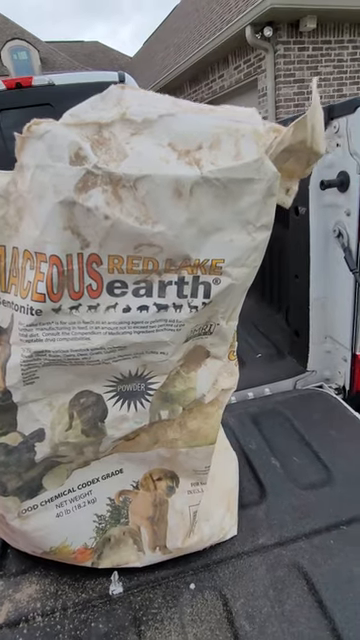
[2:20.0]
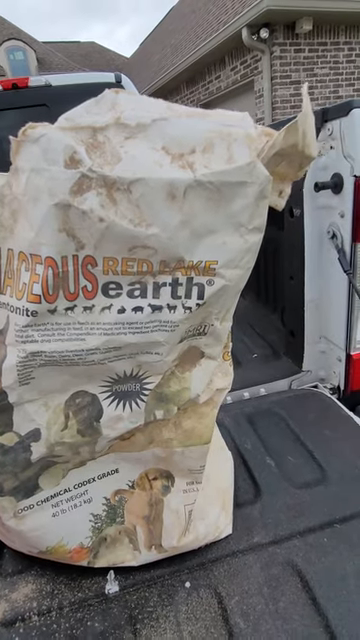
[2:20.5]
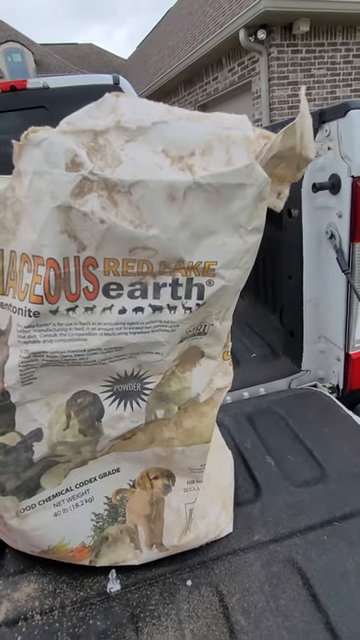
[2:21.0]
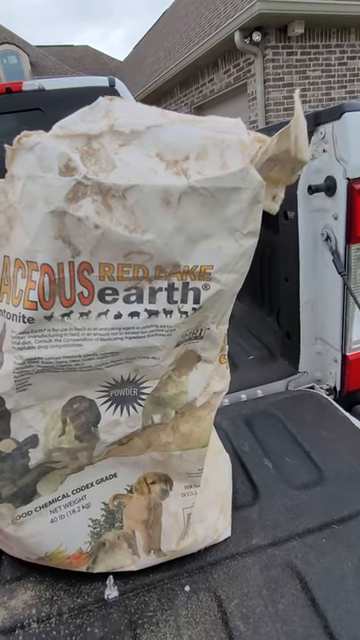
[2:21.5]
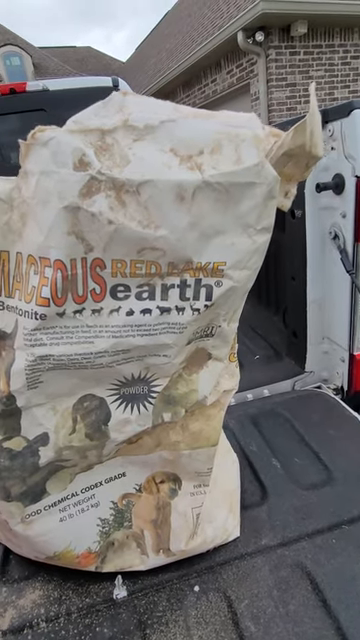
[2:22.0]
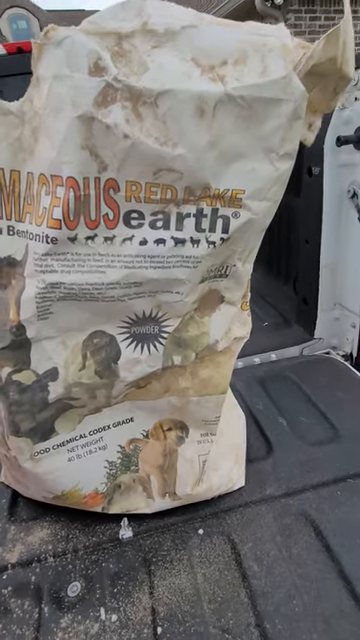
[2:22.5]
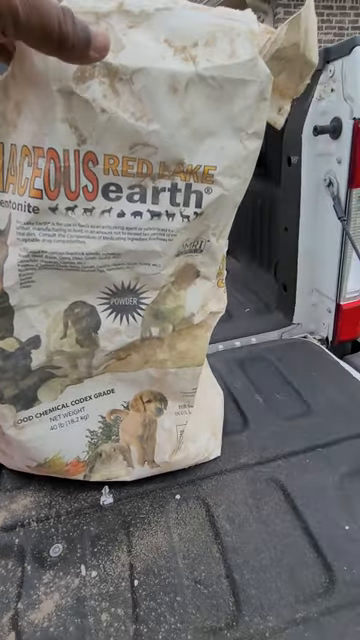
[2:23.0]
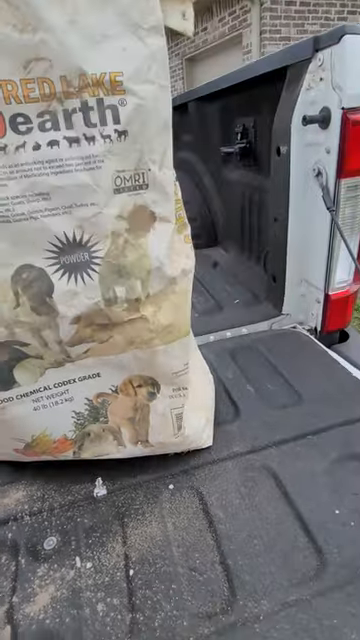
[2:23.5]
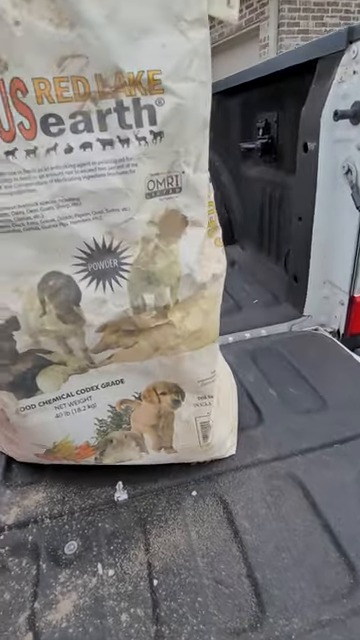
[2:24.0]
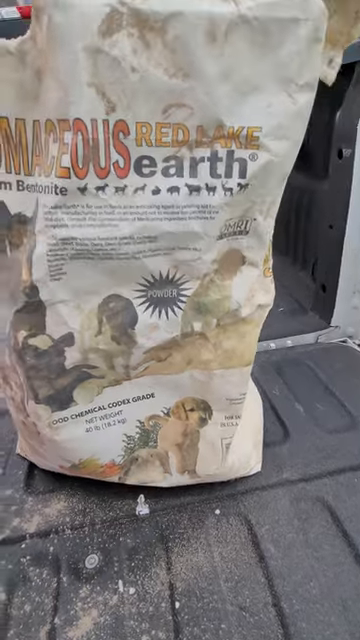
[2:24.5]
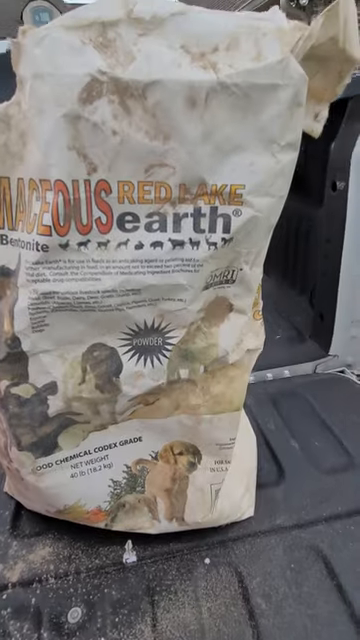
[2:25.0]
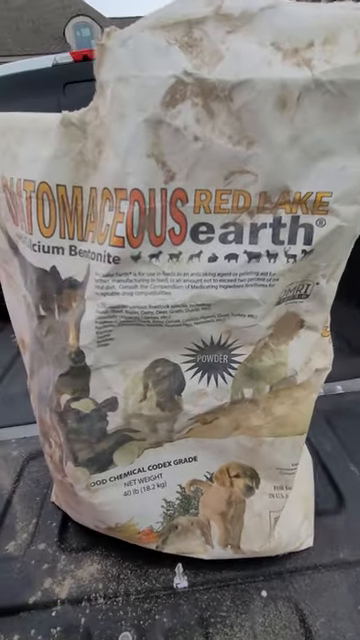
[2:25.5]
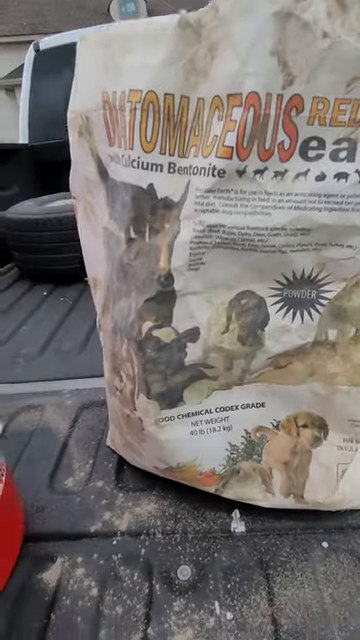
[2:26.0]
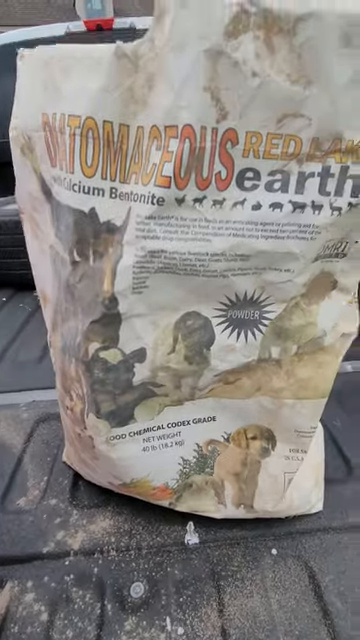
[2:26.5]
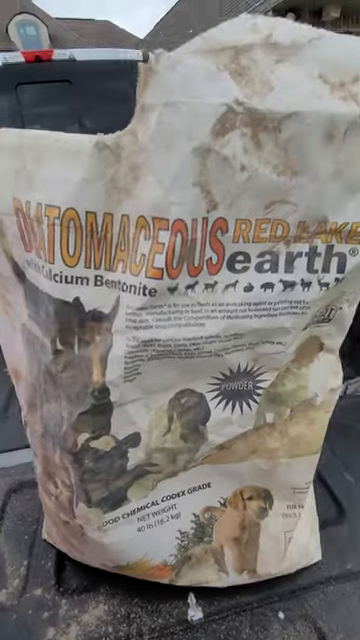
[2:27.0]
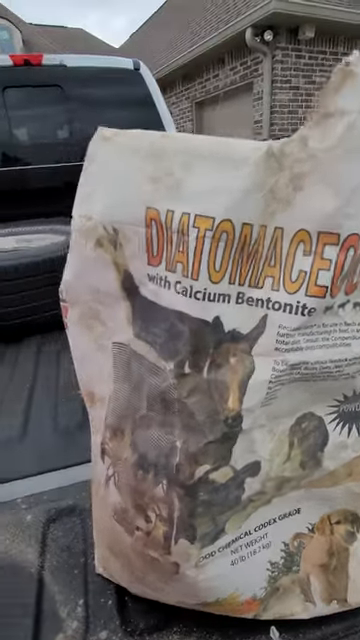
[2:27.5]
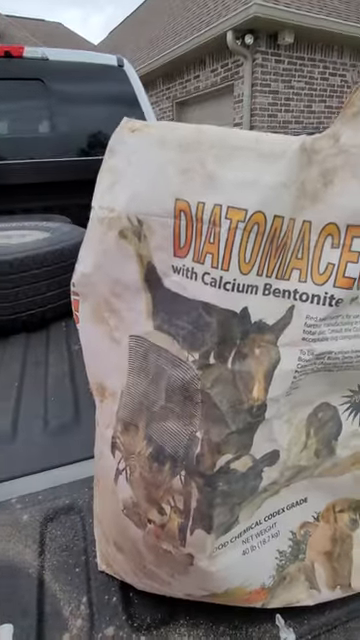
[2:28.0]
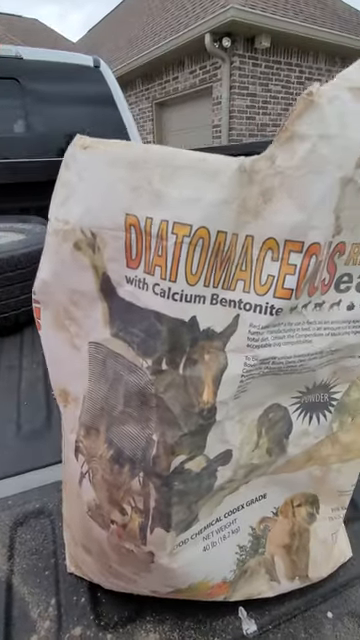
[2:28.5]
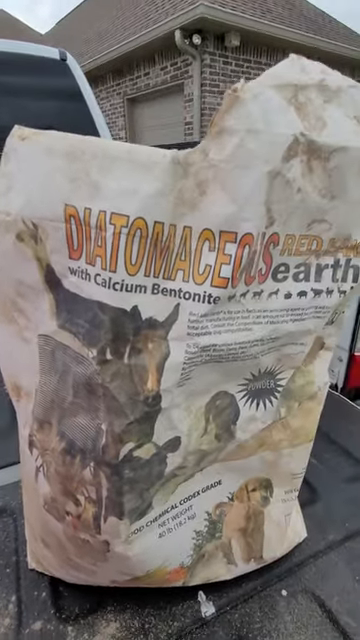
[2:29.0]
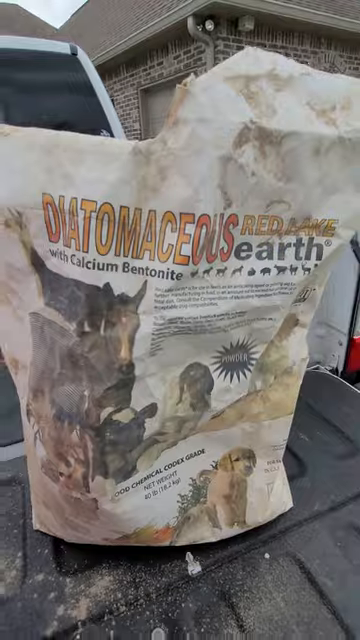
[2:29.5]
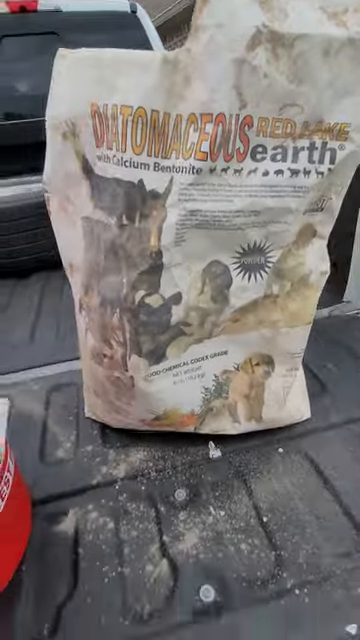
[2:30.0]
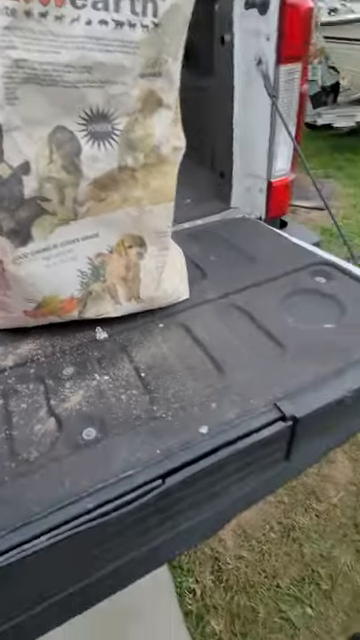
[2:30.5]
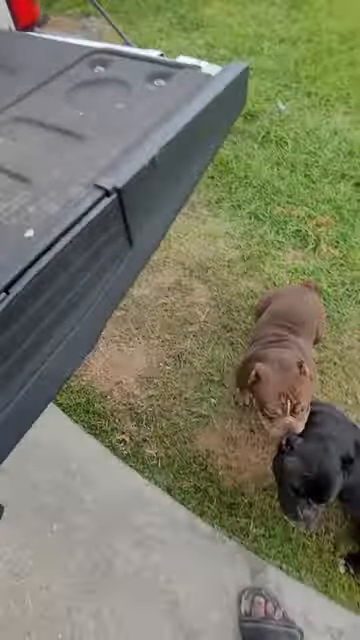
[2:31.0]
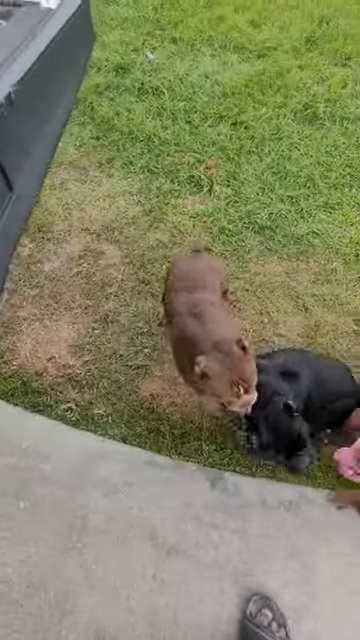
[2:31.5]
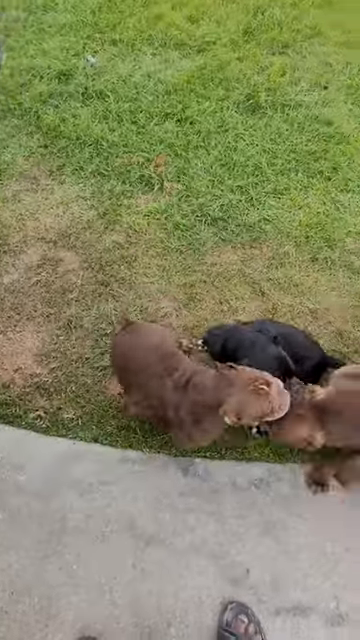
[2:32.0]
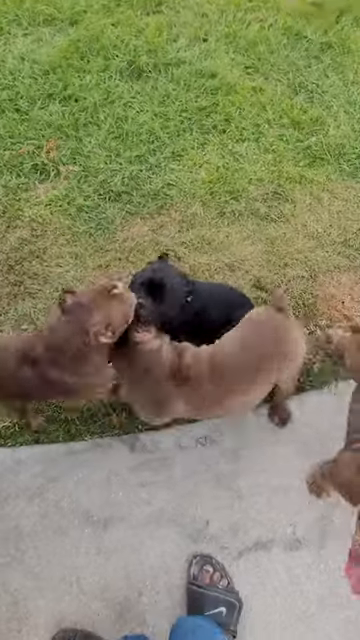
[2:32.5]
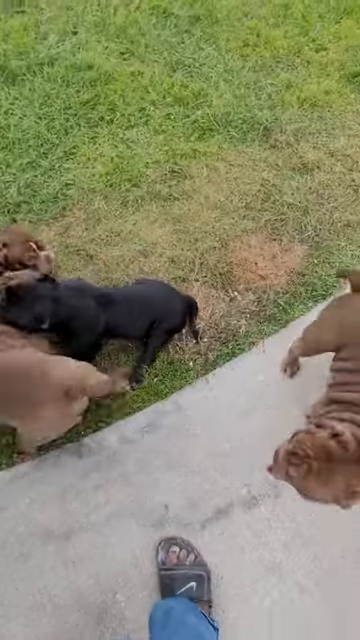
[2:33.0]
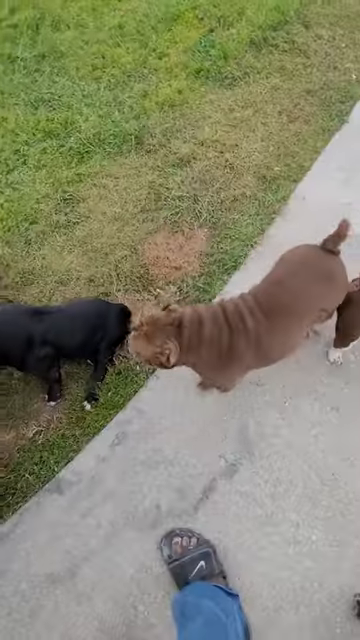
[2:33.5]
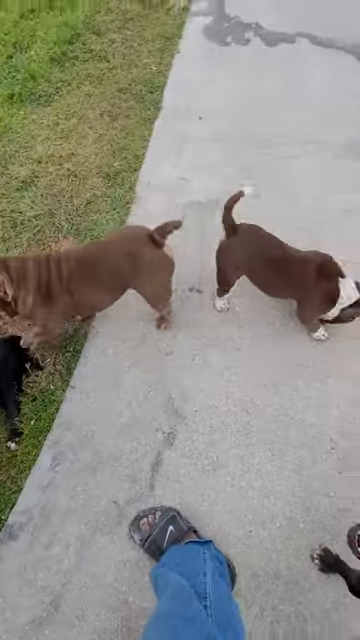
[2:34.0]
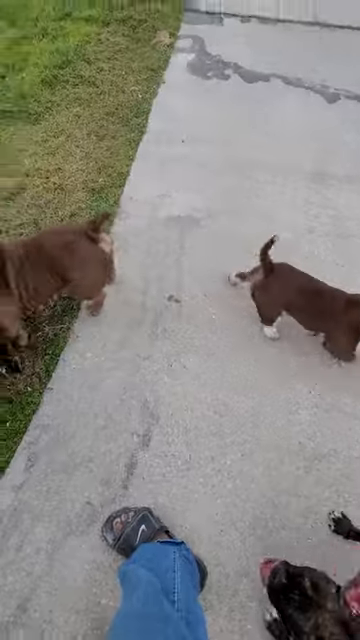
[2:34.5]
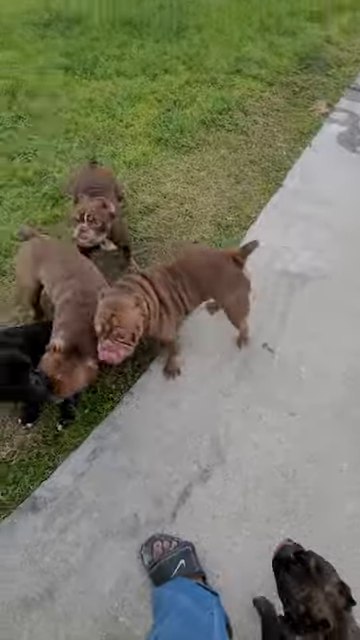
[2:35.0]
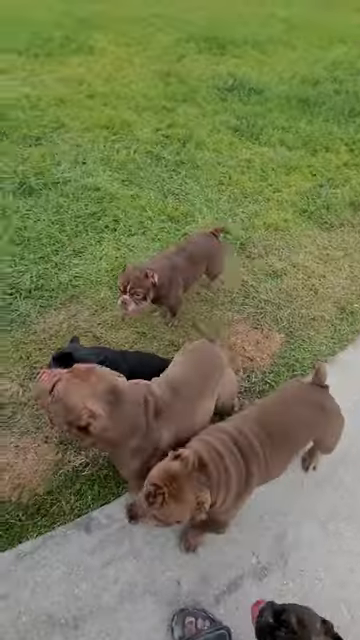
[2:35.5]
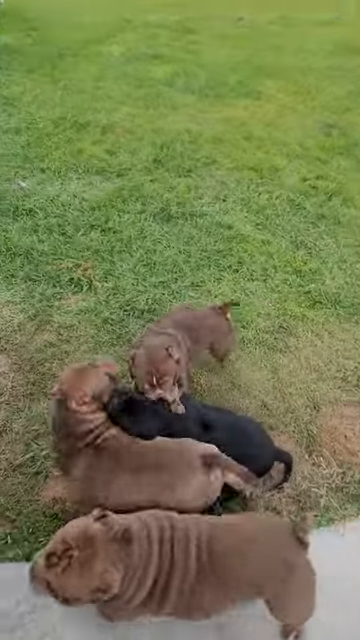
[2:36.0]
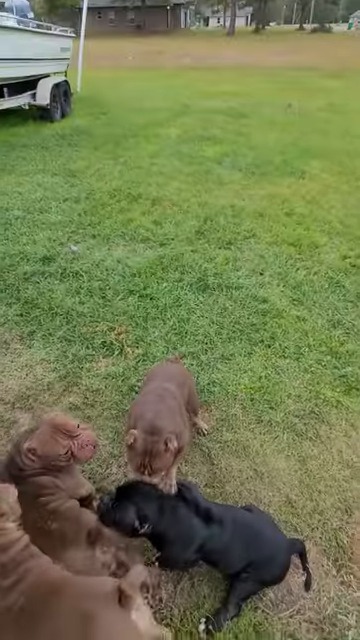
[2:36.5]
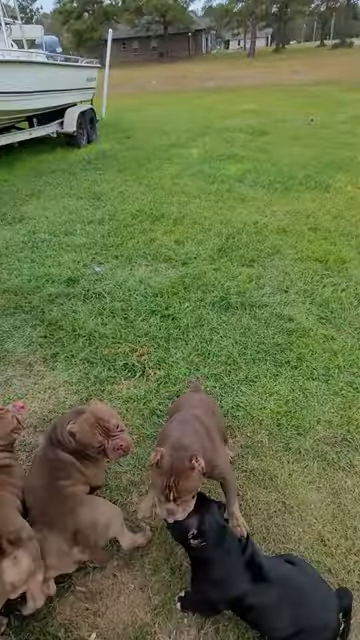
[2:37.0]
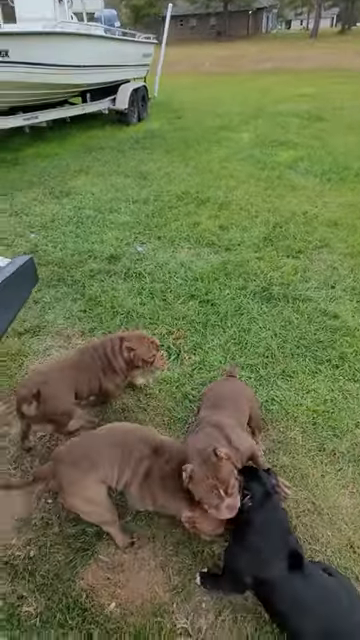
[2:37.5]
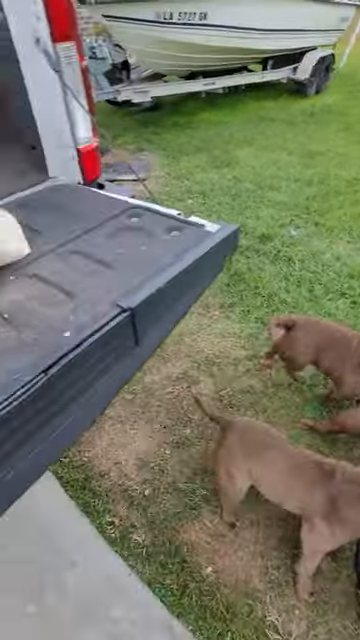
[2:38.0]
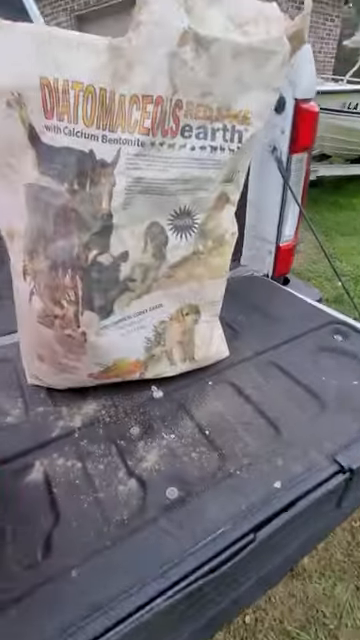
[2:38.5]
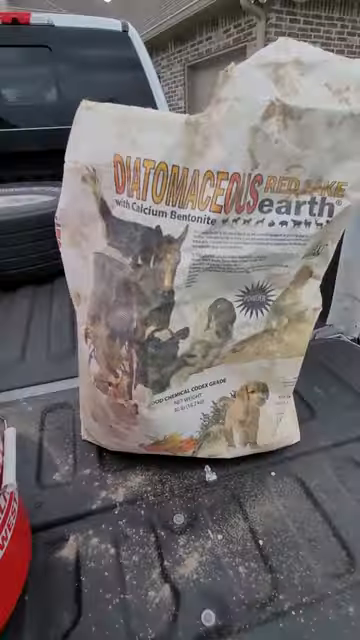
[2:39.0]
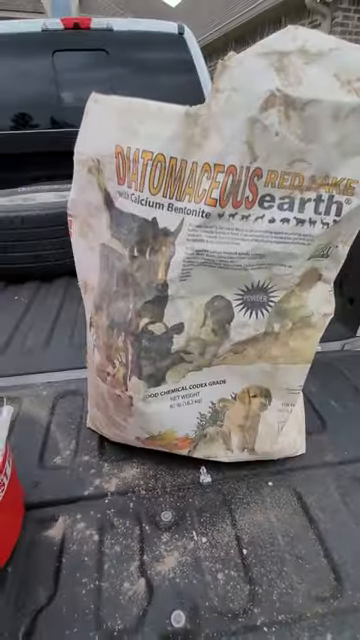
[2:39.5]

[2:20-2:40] The white bag and its surroundings are shown. The truck possibly is white: the inside of the tailgate is white and a little molding around the top of the truck is white as well. The owner appears to be parked right outside his house. The camera stays on the front side of the bag, which is still standing upright on the truck bed. The owner then moves the camera to the right and downward, showing the dogs again, all looking very happy and playful. There appear to be six dogs in total, seemingly four brown and two black, and they all look like the same breed, either American Bulldog or Pit Bull.